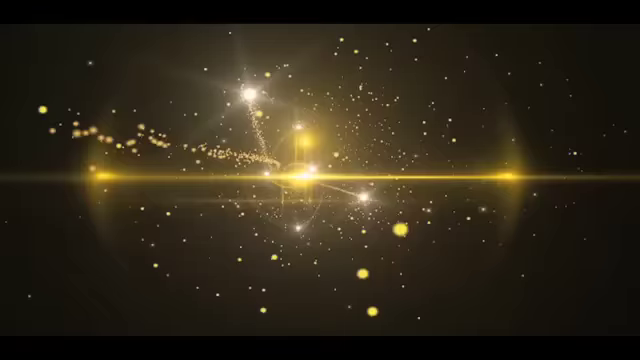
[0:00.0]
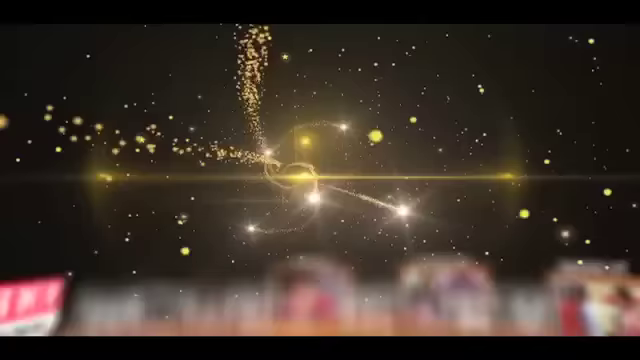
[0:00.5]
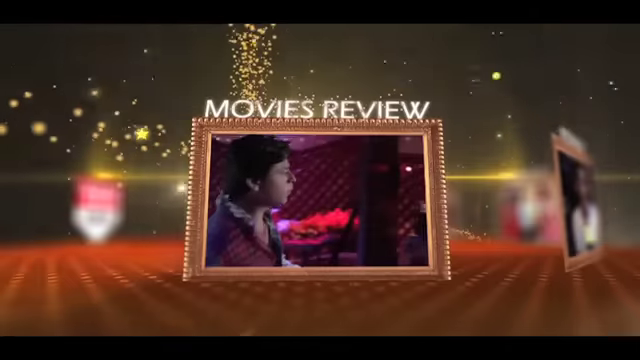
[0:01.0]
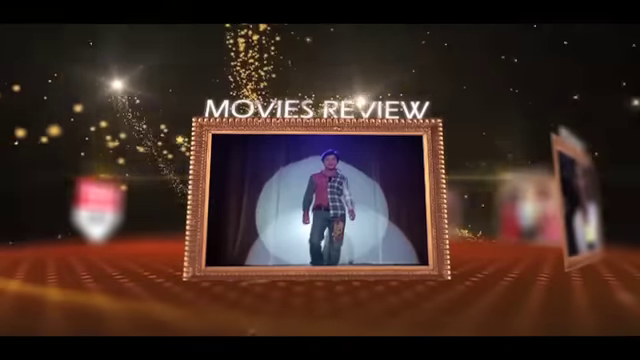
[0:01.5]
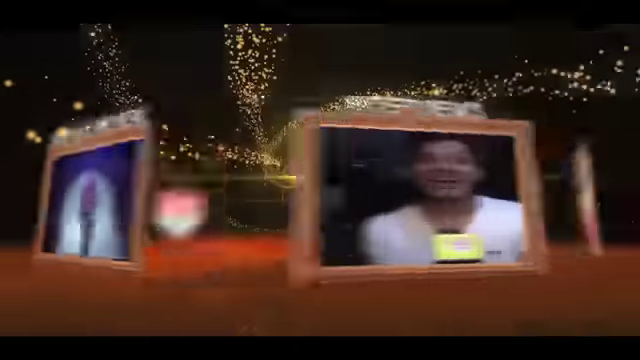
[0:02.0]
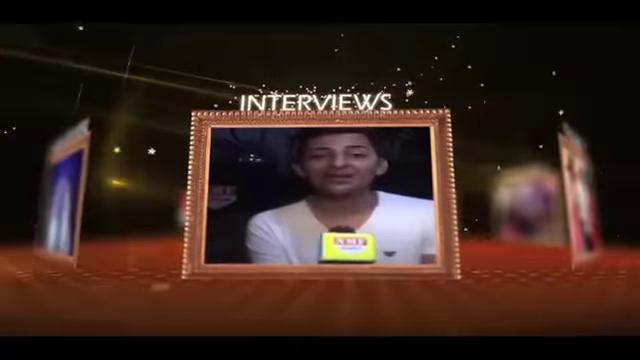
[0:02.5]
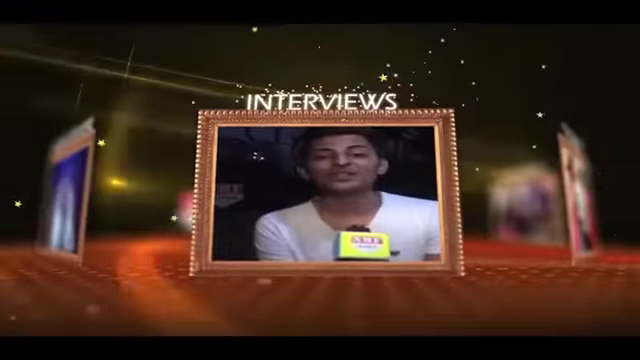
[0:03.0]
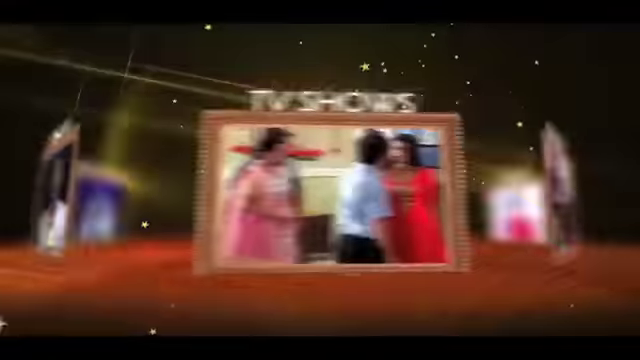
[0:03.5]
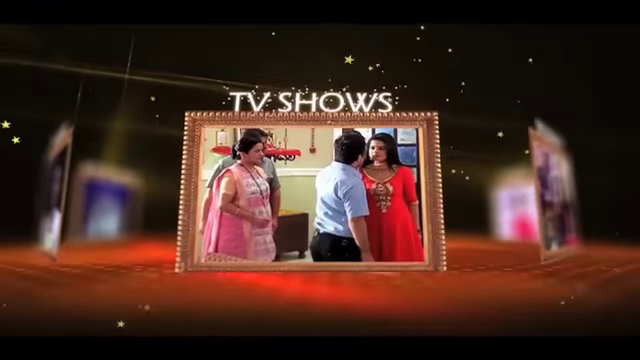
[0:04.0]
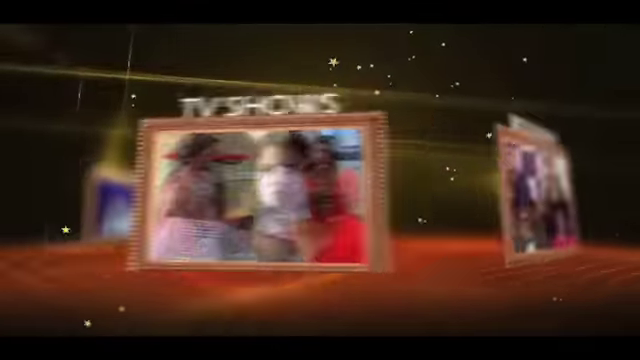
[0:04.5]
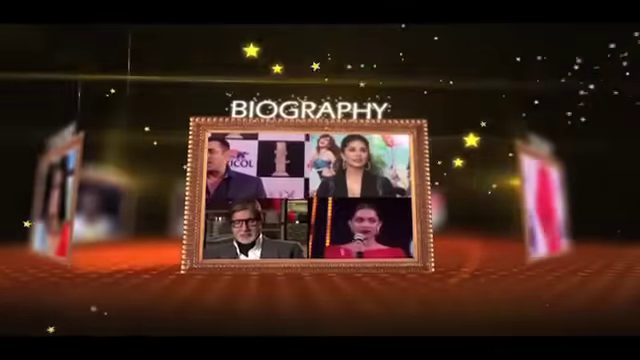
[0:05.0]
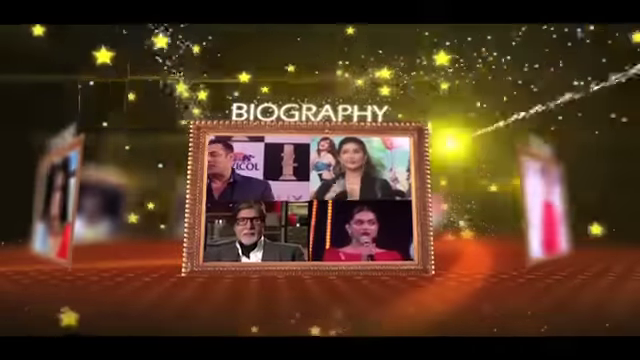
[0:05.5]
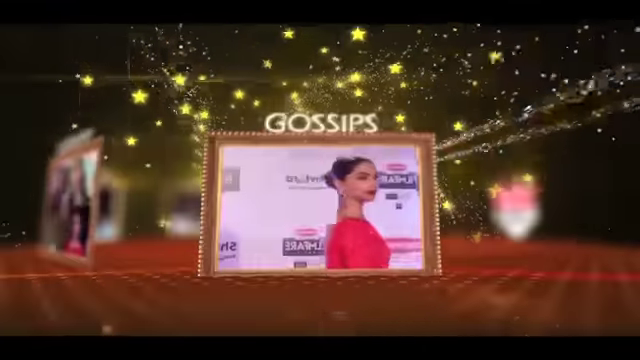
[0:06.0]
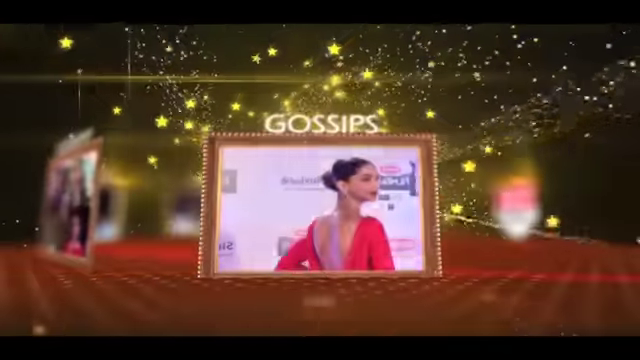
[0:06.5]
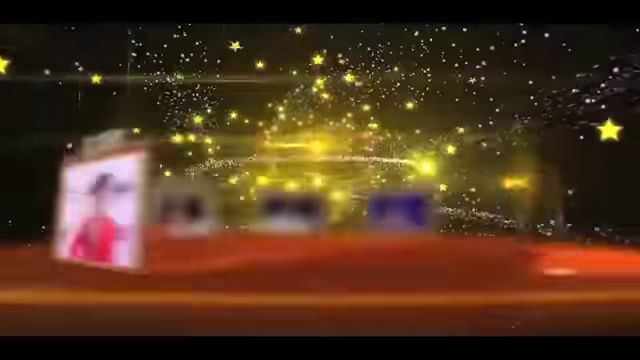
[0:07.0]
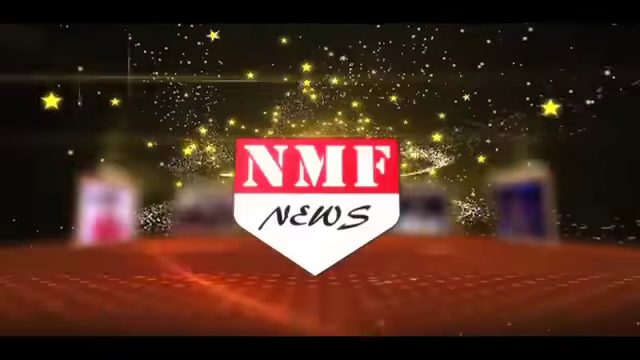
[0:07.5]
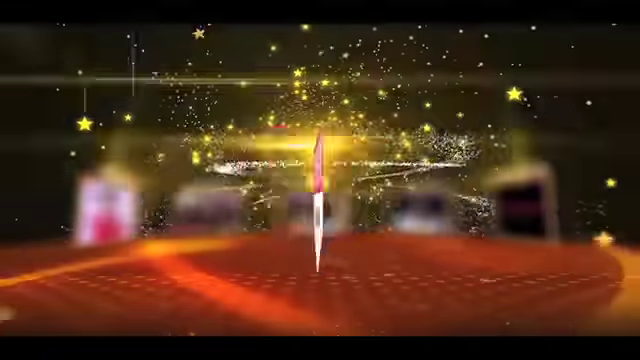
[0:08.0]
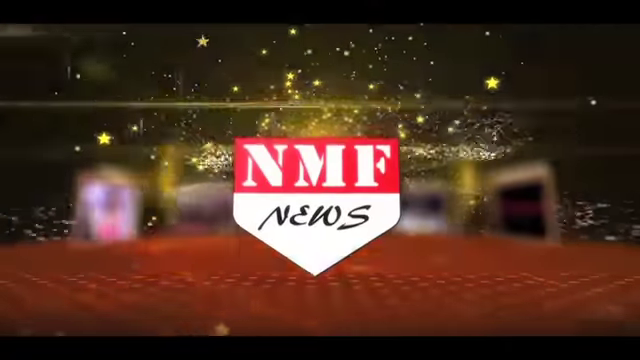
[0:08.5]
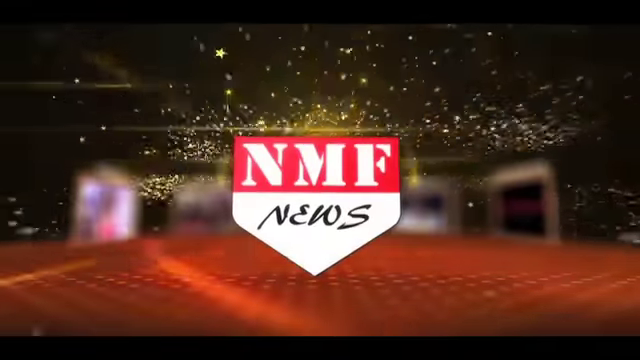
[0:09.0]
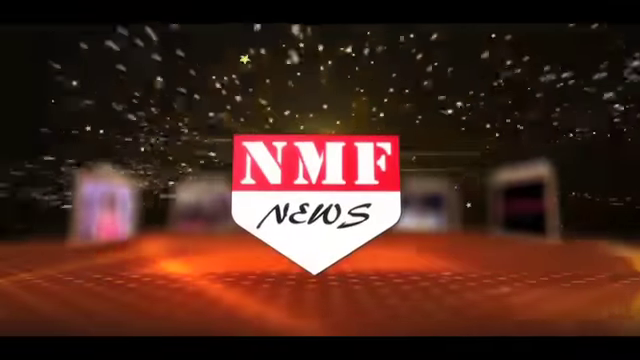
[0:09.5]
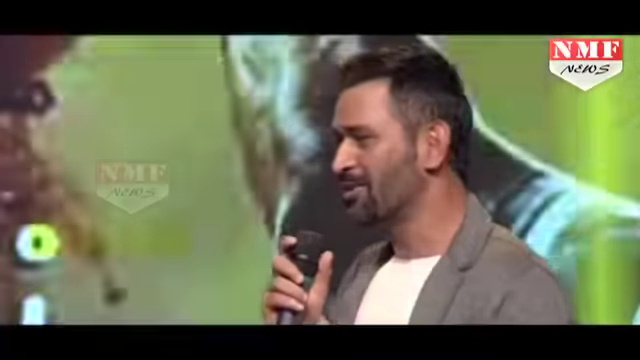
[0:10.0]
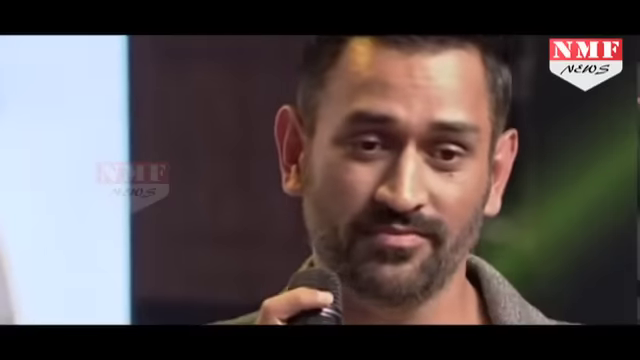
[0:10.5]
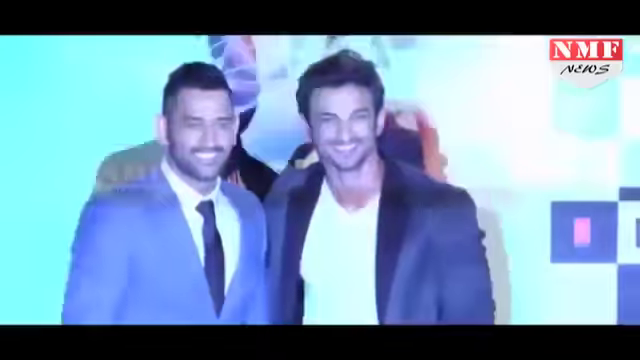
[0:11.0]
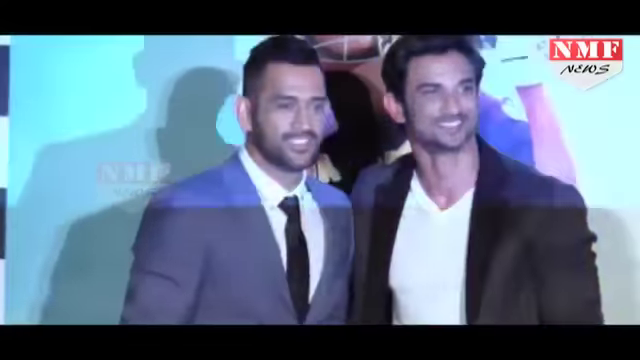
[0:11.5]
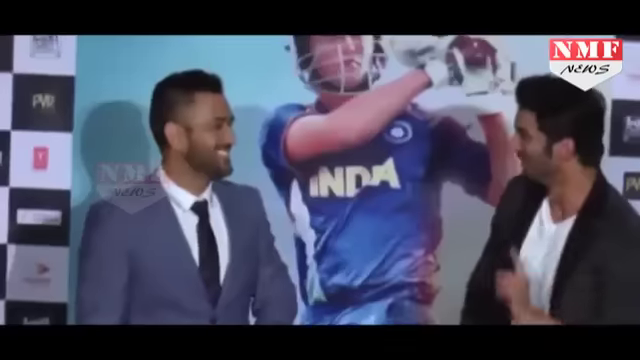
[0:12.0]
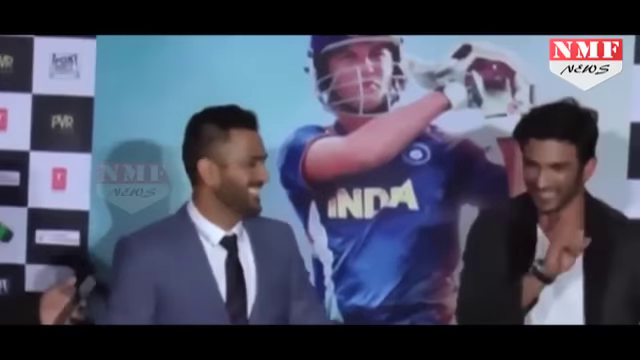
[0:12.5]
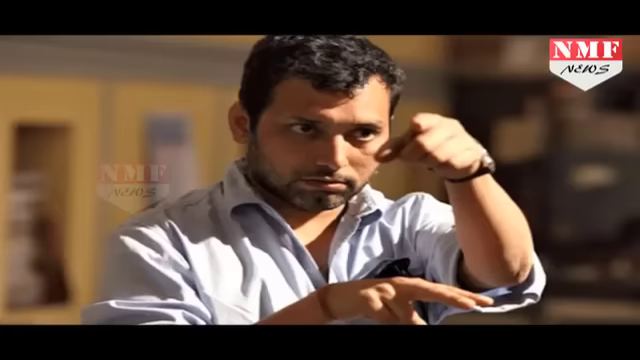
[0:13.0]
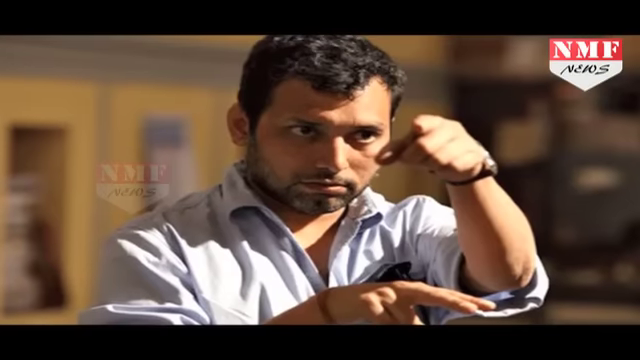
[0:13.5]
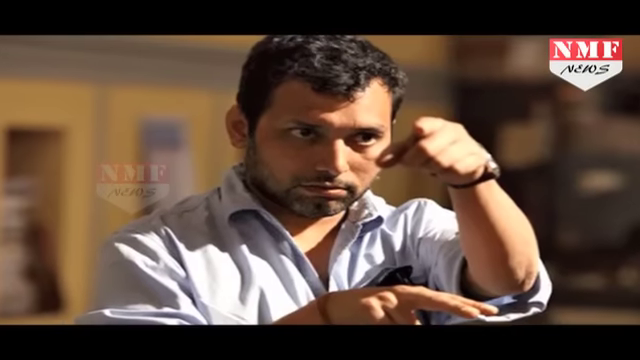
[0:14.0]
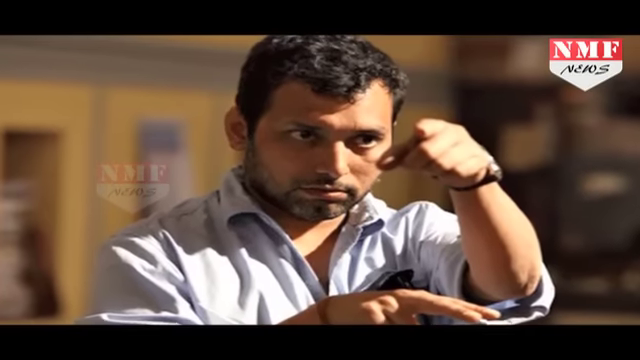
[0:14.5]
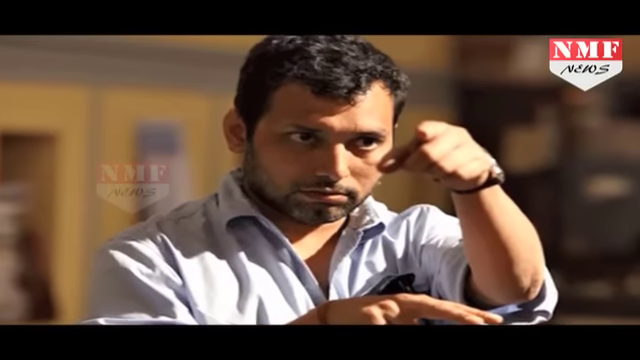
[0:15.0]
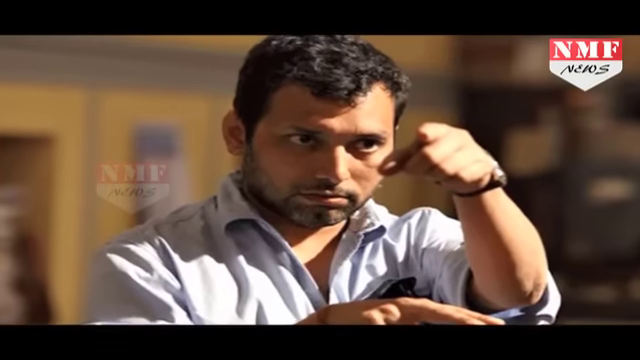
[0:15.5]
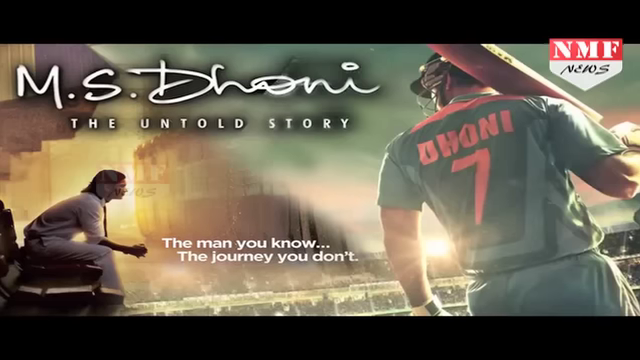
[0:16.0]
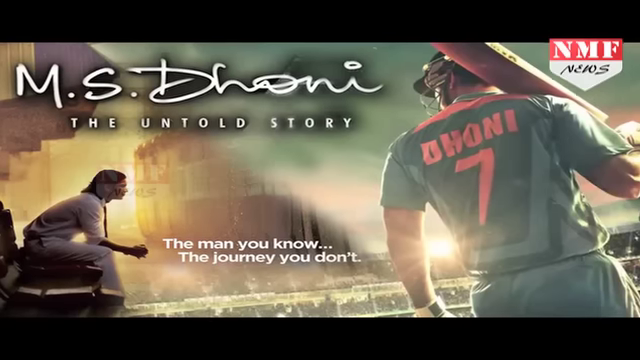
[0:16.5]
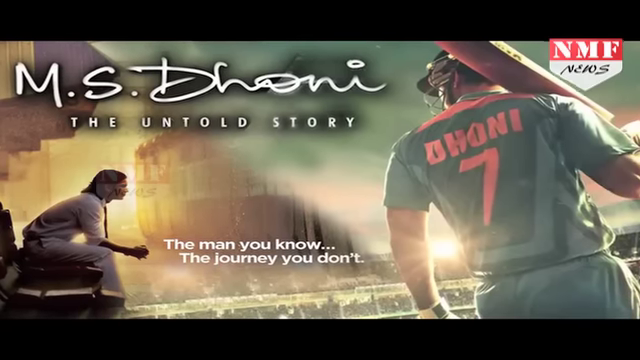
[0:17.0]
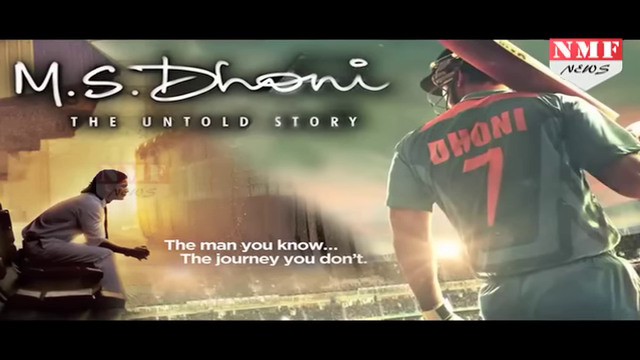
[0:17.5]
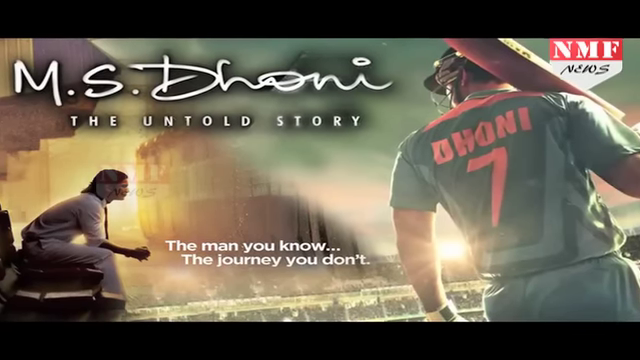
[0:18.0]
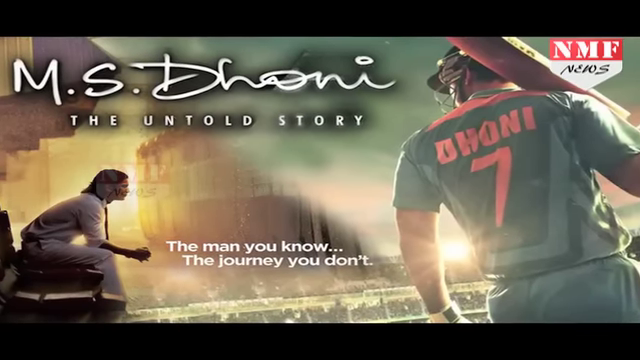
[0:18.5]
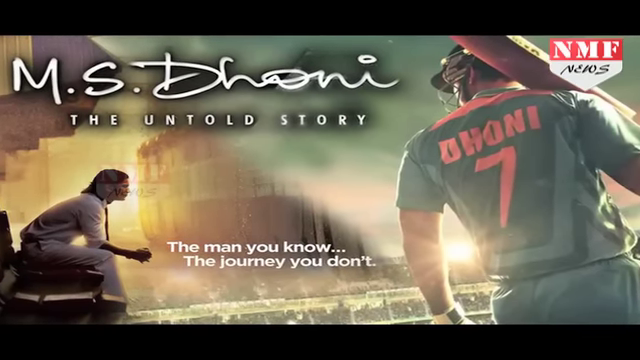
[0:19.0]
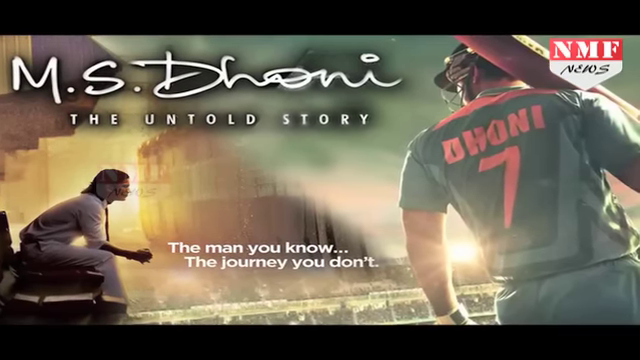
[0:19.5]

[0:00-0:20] The video opens on a scene of the sky with what looks to be stars or meteors traveling toward the camera. A series of picture frames then begins, rotating on an orangish, hazy base. The first frame is labeled "movies review" and contains a clip of a movie that is currently showing. The next frame, "interviews", surrounds a person with a microphone in front of him who is being interviewed. The following frame, "biography", shows several movie stars or actors being interviewed. Next comes a frame labeled "gossips" with an actress in the middle. The title "NMF News" then appears; it seems to be an entertainment news station.